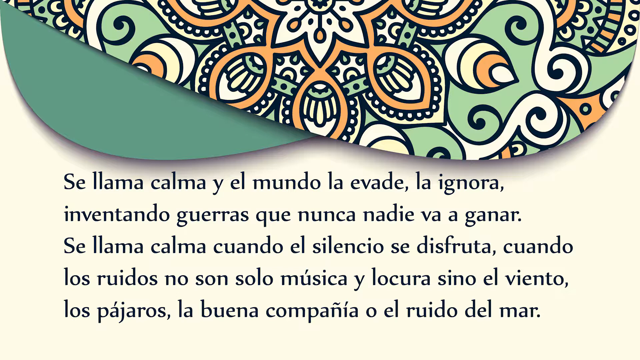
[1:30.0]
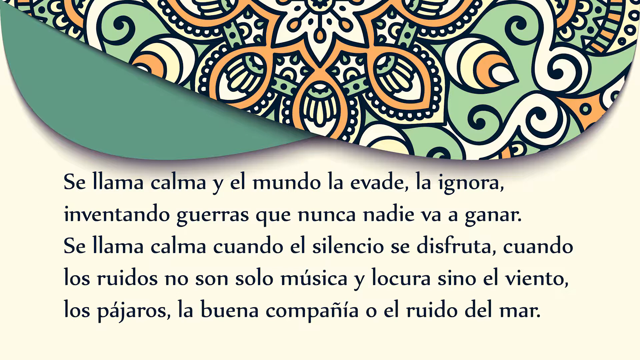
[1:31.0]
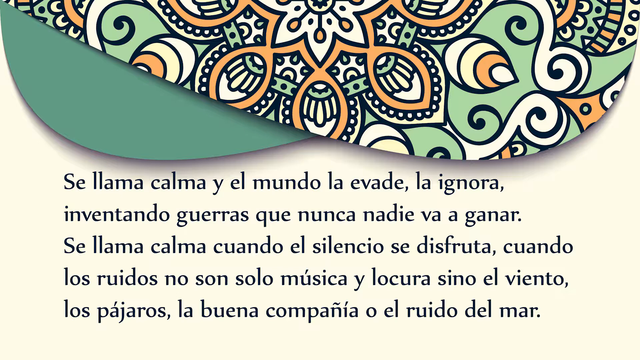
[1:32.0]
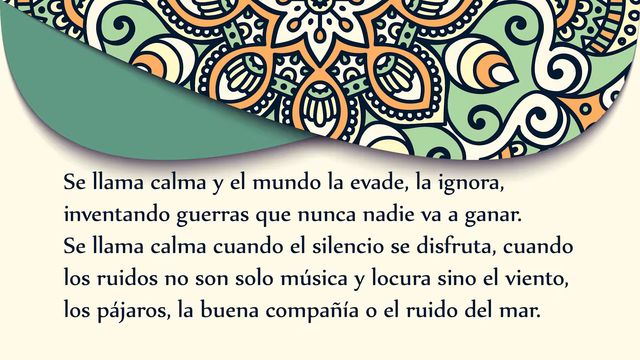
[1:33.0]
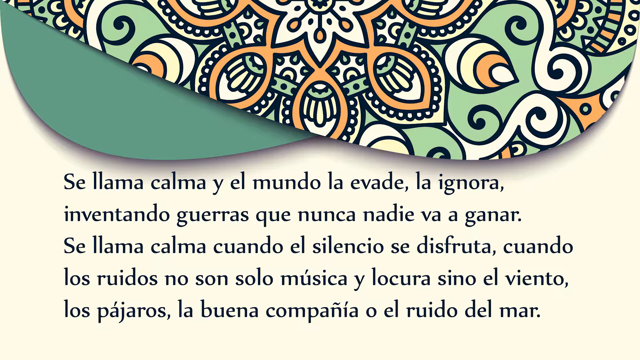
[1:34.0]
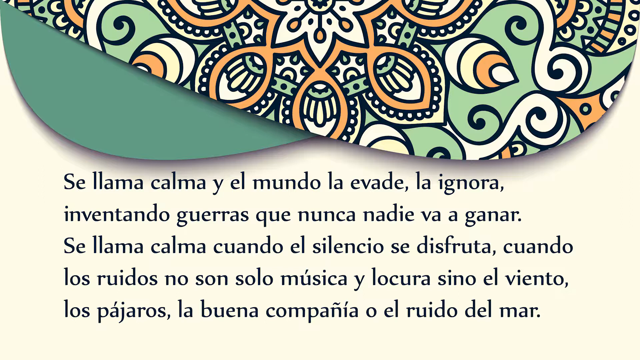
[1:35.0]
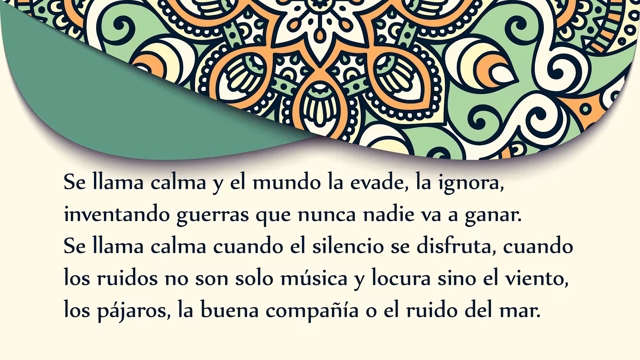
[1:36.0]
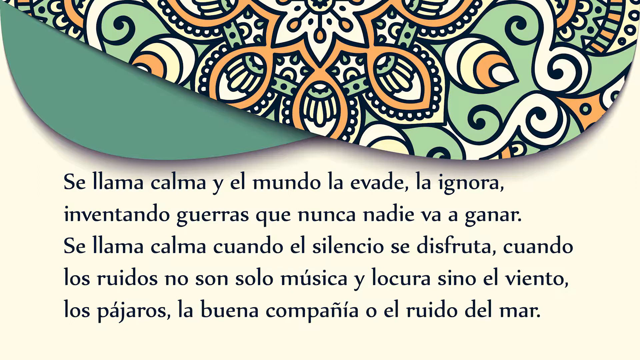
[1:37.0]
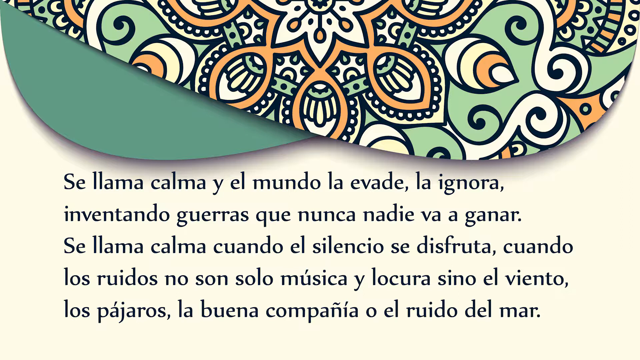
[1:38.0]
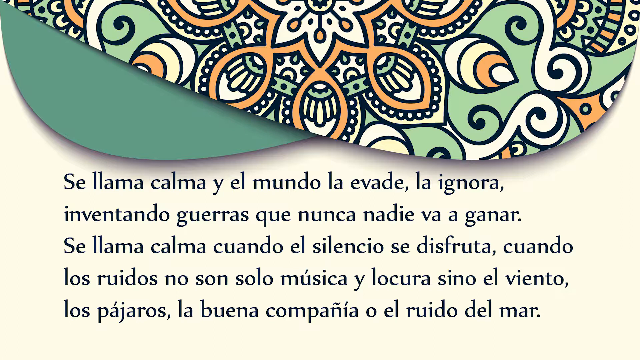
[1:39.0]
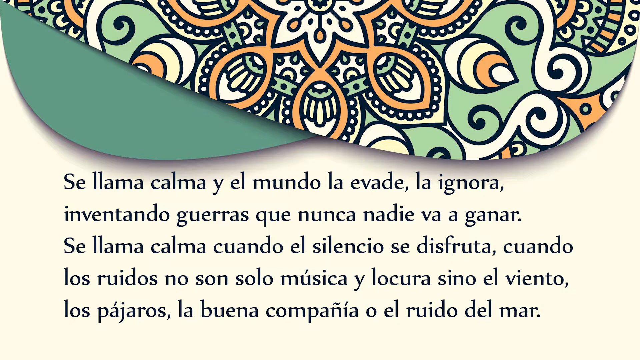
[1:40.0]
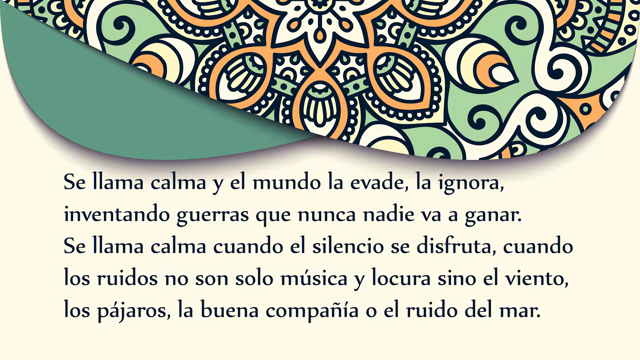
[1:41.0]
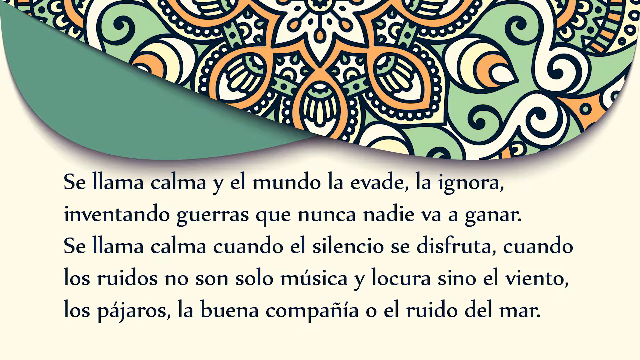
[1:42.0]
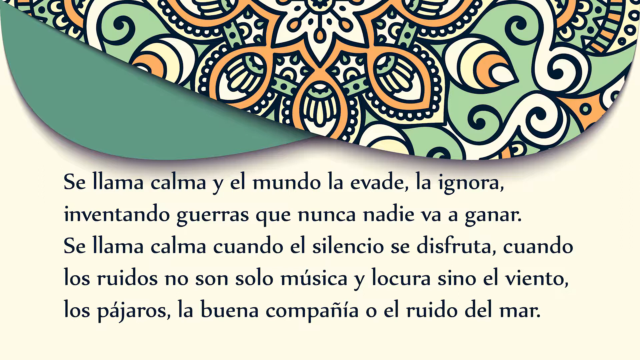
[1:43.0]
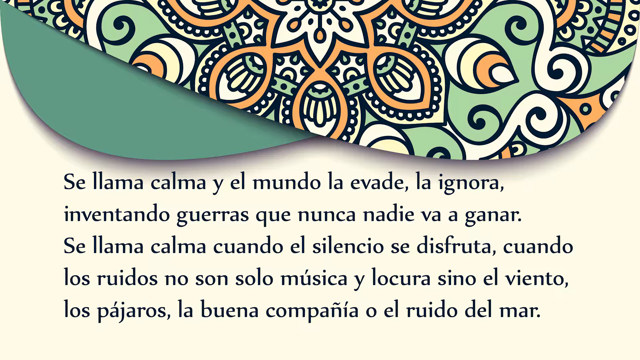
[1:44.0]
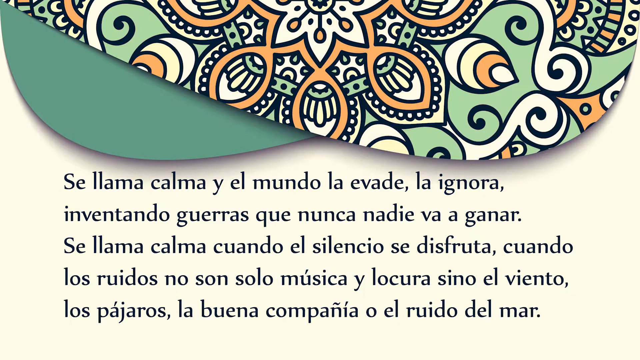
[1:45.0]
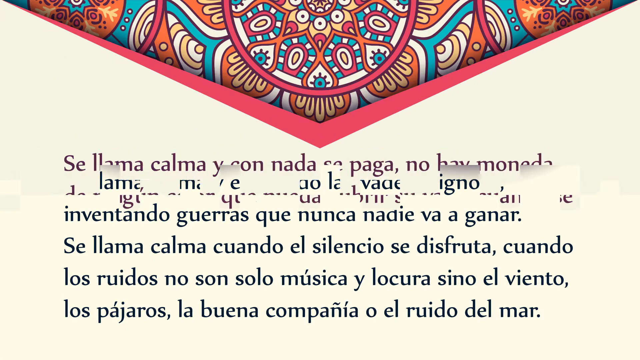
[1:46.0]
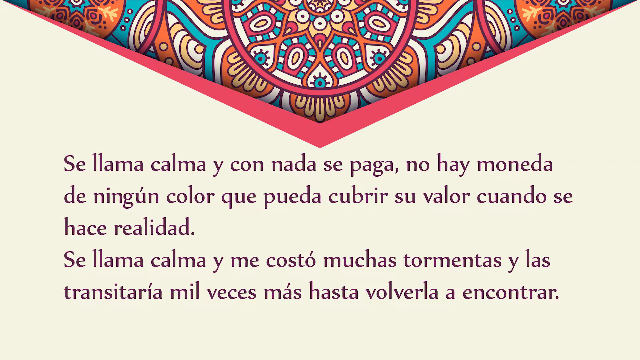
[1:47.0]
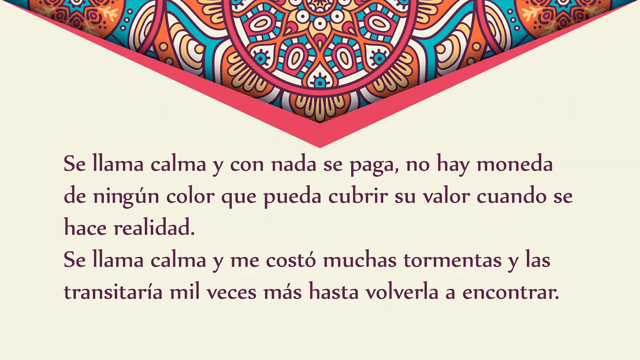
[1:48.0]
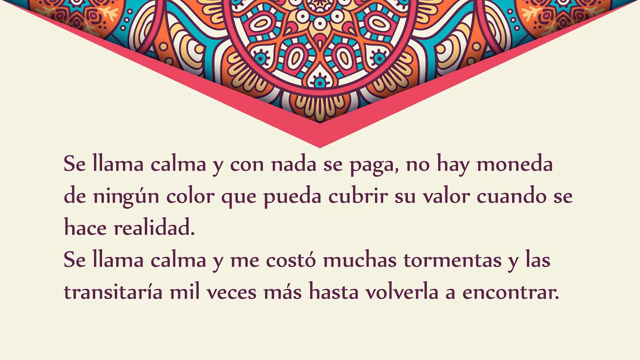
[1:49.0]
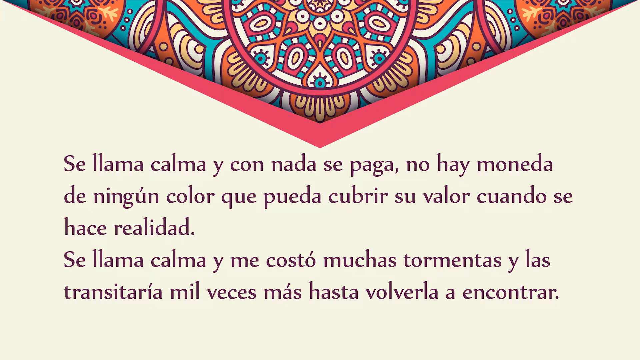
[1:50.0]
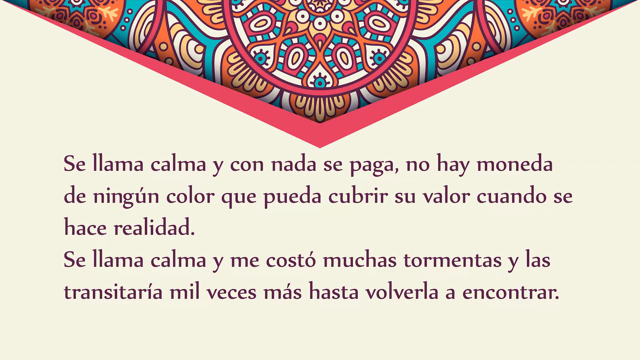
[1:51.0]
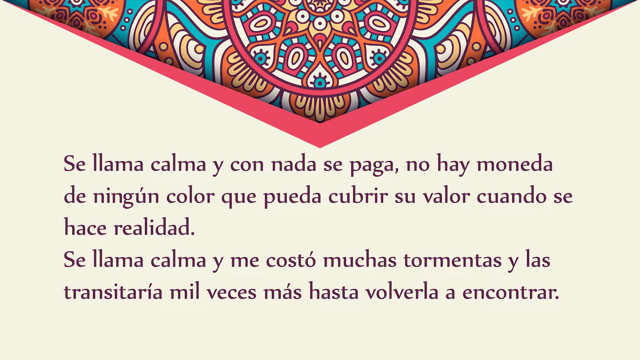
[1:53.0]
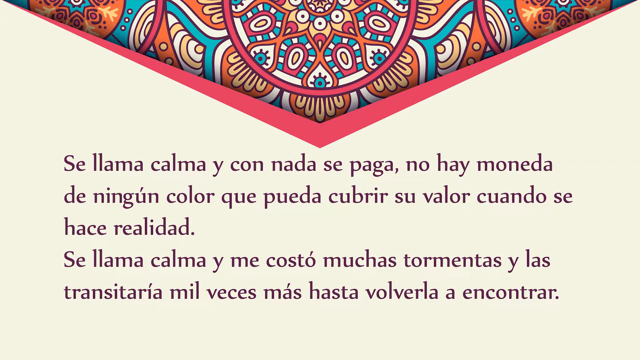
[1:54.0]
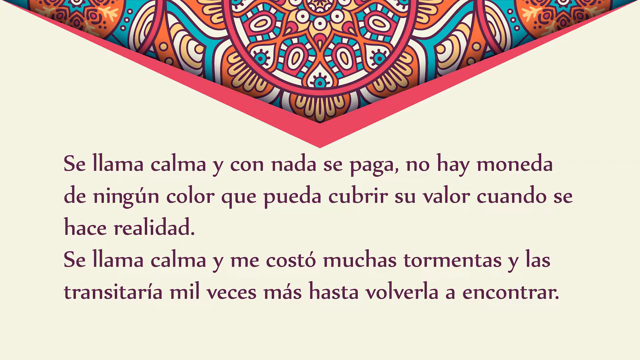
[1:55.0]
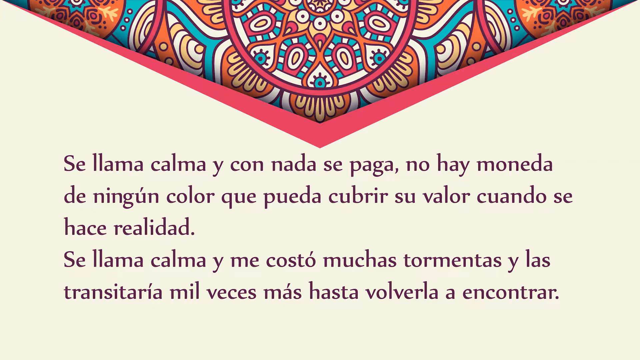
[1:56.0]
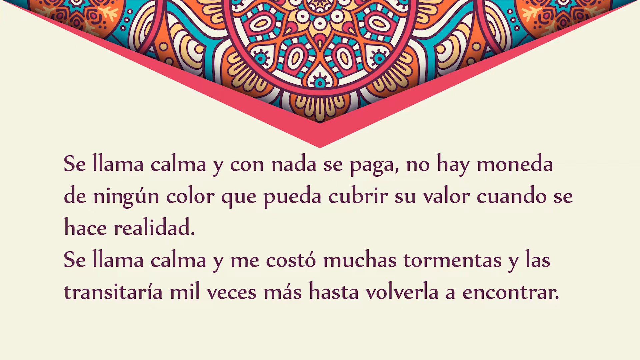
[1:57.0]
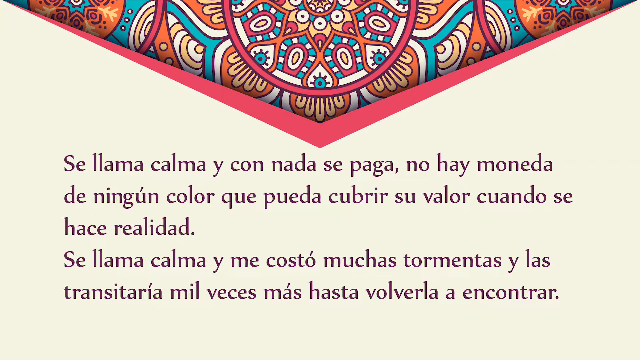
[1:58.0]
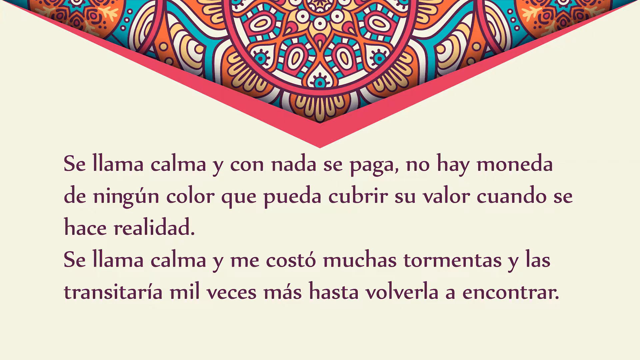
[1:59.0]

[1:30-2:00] The screen stays for quite a while, then dissolves from top to bottom. At the top, the pattern comes down almost like the top of an envelope, starting at the upper corners and coming down to a point. It has bolder colors: circular patterns in the center extending out to a star, then to another circle, then to overlapping prints, in orange and deeper but not bright blues, plus reds, almost an orange red. It is outlined with a layer of red that gets thicker as it comes down to the point in the center of the page. Two more sentences appear over the background, again starting with the same three words. There are several iterations of the pattern, with many different elements, including reds and blues that start at the middle and go all the way to the top, divided into small elements such as white and pink. The pattern at the top is very complex with many layers.